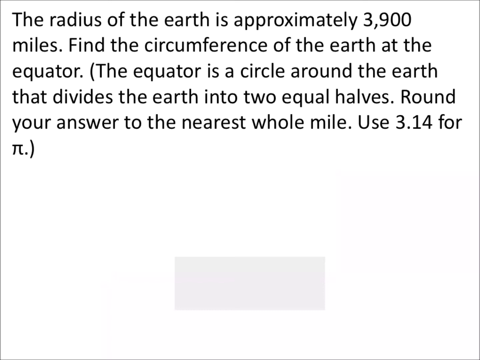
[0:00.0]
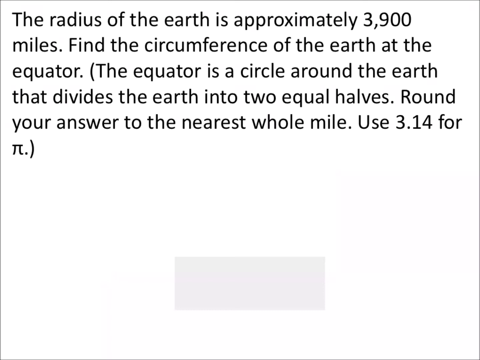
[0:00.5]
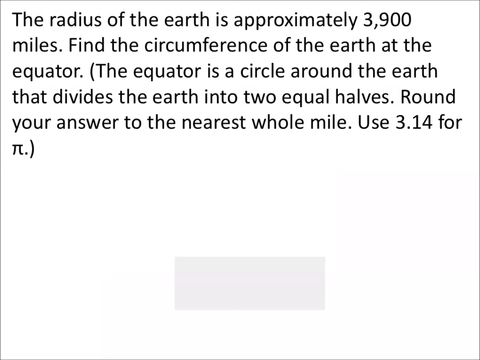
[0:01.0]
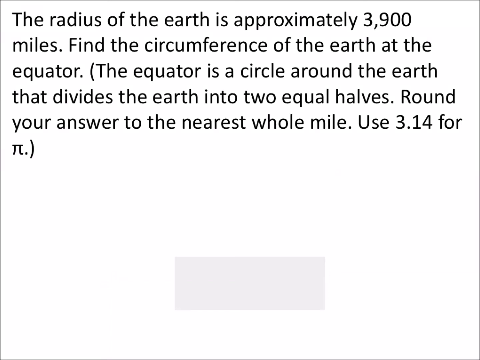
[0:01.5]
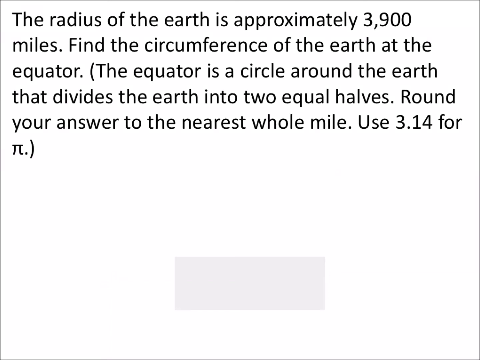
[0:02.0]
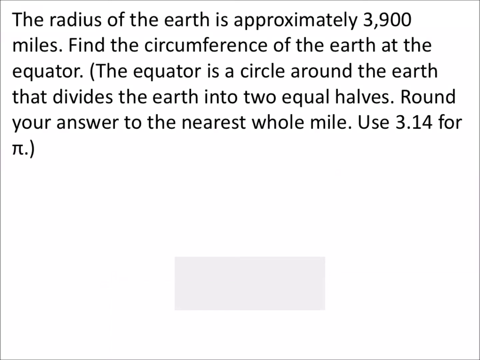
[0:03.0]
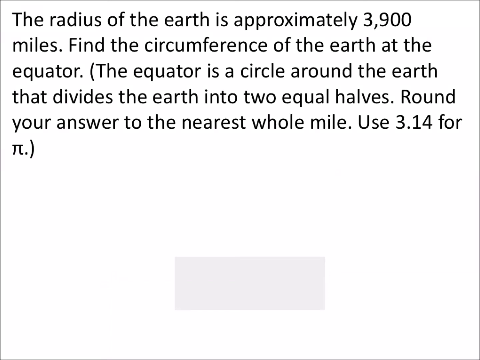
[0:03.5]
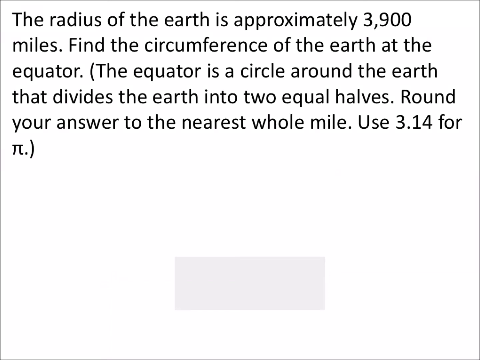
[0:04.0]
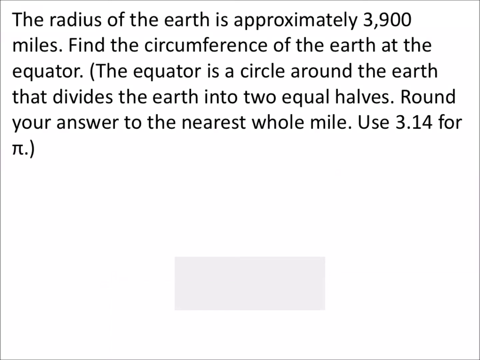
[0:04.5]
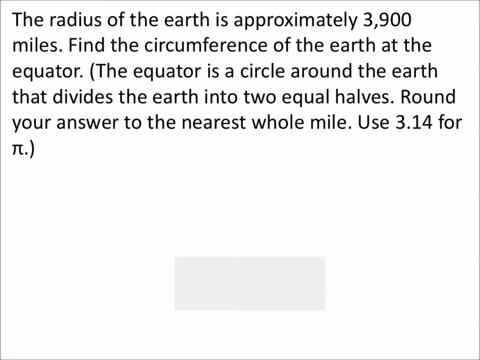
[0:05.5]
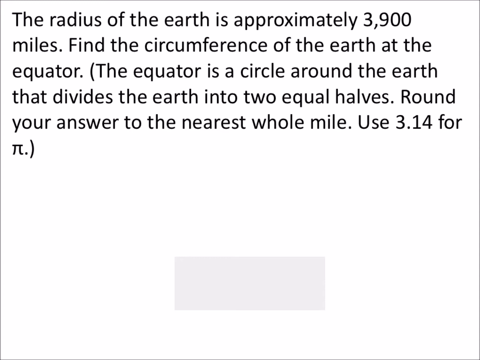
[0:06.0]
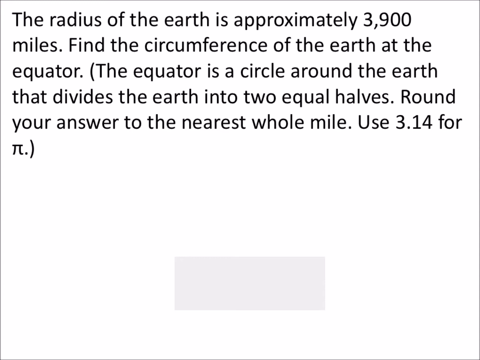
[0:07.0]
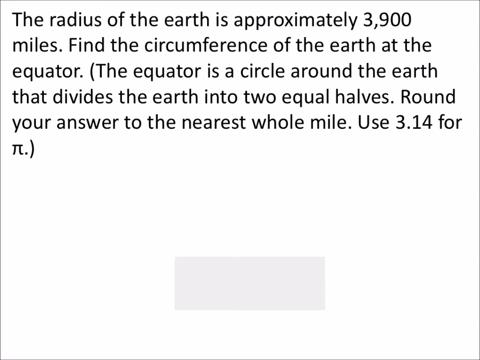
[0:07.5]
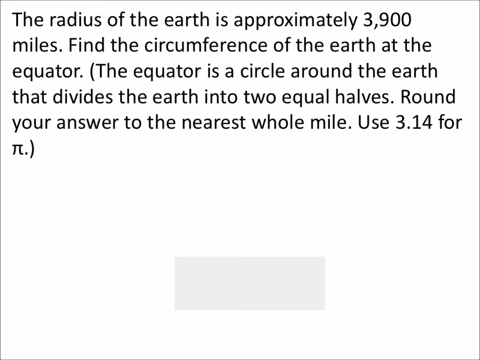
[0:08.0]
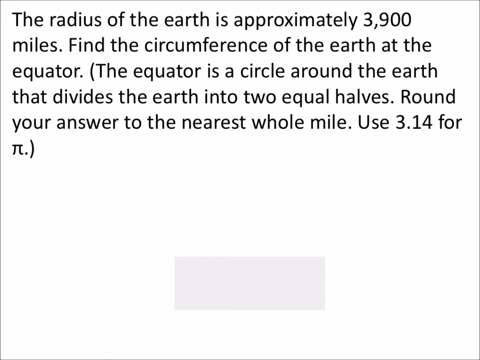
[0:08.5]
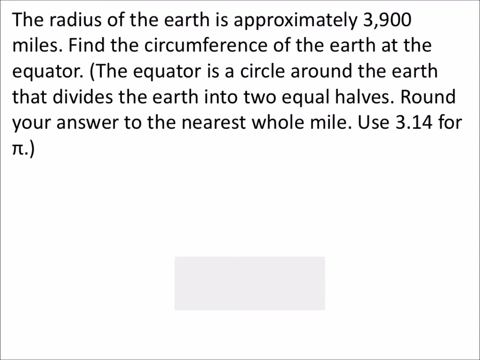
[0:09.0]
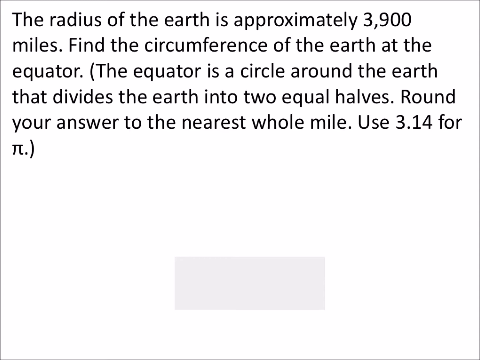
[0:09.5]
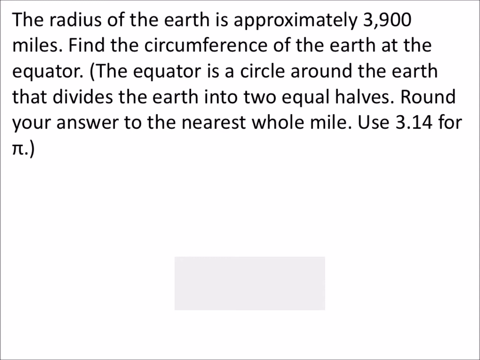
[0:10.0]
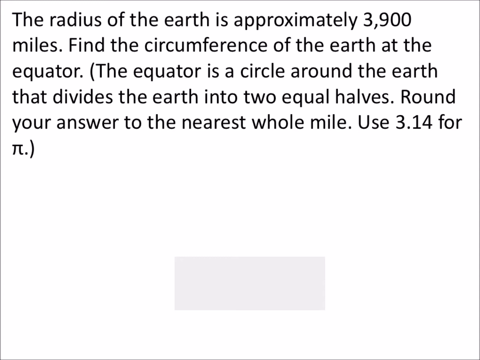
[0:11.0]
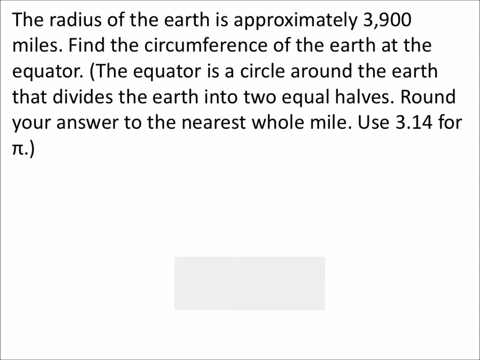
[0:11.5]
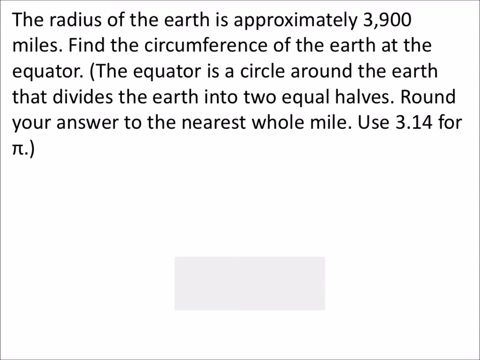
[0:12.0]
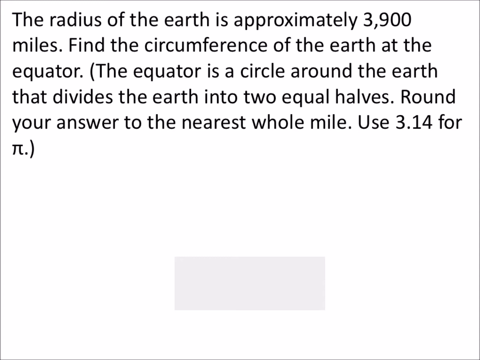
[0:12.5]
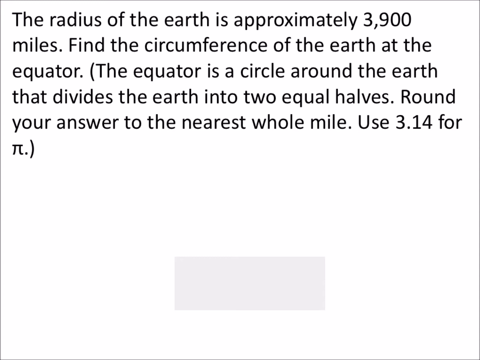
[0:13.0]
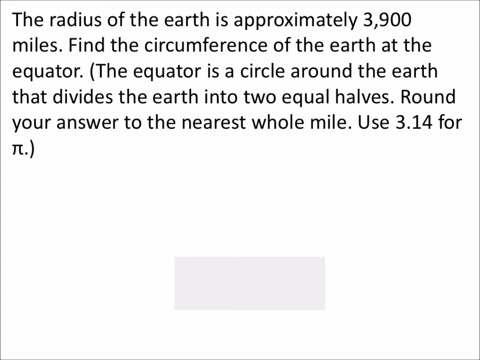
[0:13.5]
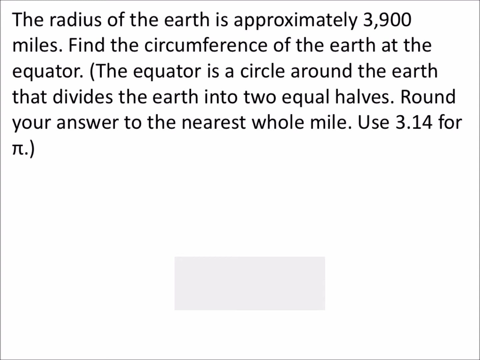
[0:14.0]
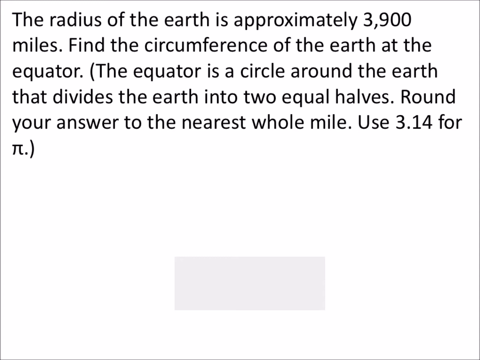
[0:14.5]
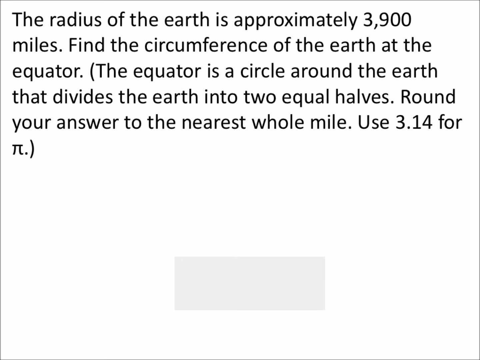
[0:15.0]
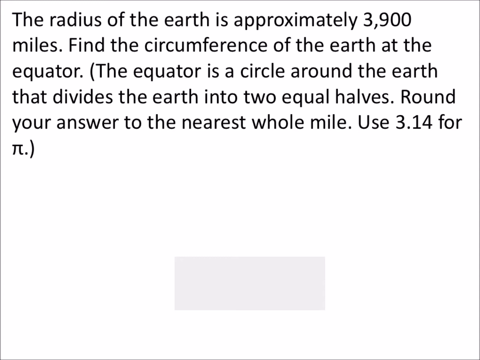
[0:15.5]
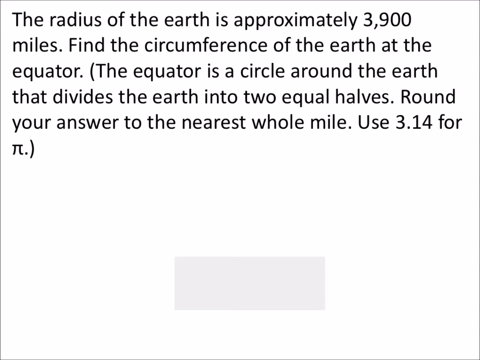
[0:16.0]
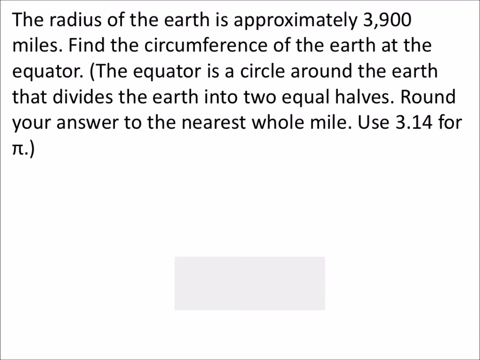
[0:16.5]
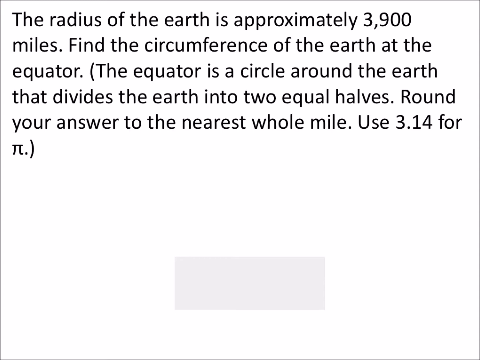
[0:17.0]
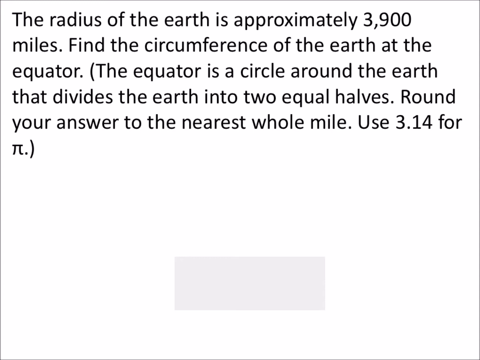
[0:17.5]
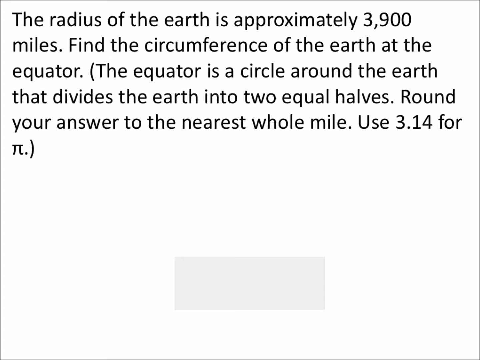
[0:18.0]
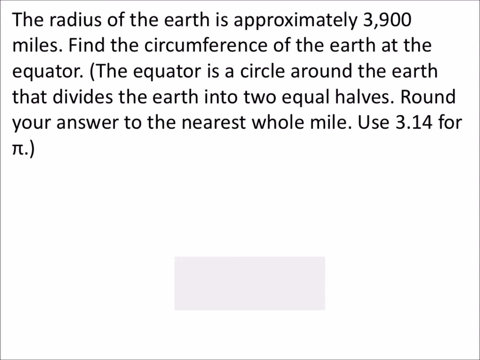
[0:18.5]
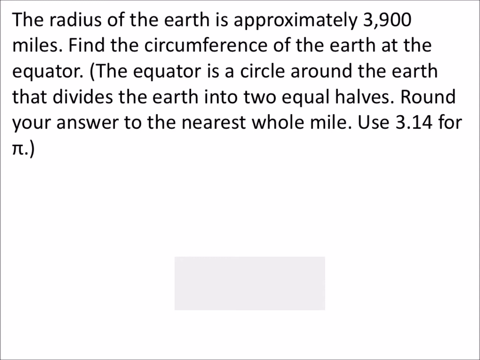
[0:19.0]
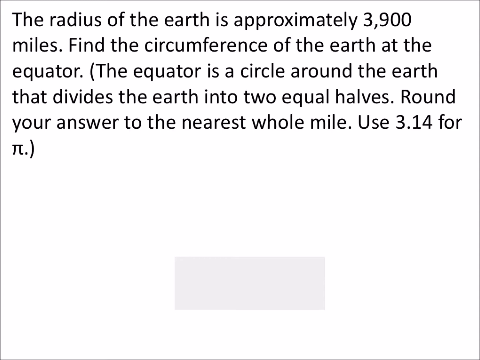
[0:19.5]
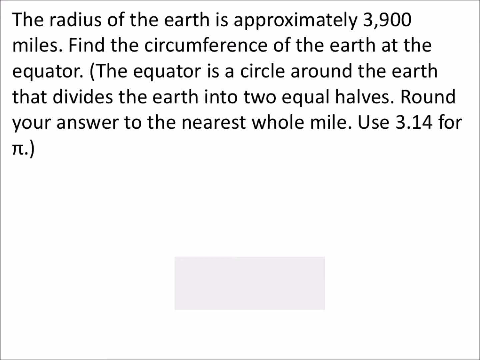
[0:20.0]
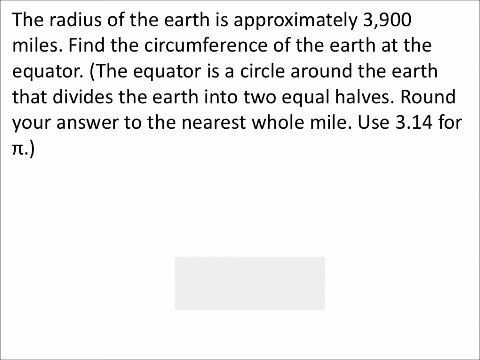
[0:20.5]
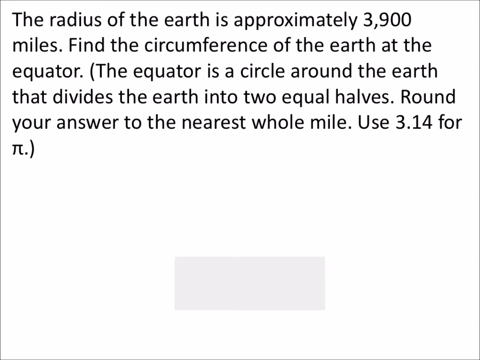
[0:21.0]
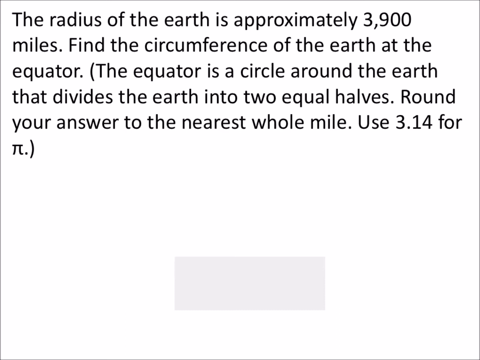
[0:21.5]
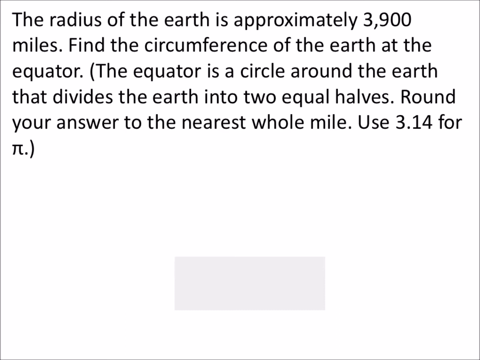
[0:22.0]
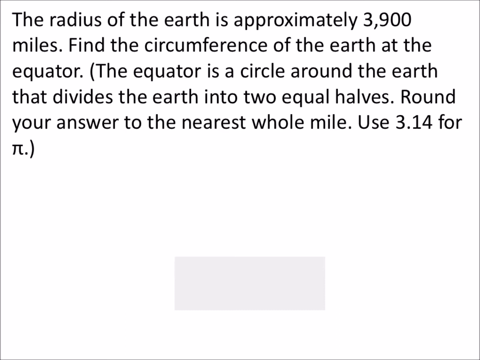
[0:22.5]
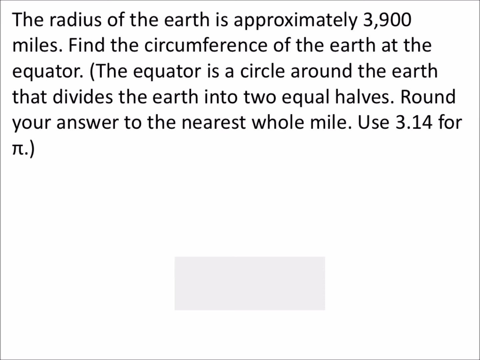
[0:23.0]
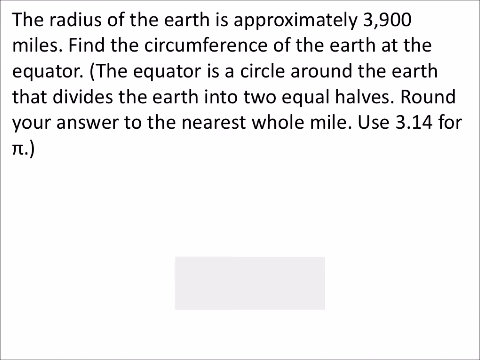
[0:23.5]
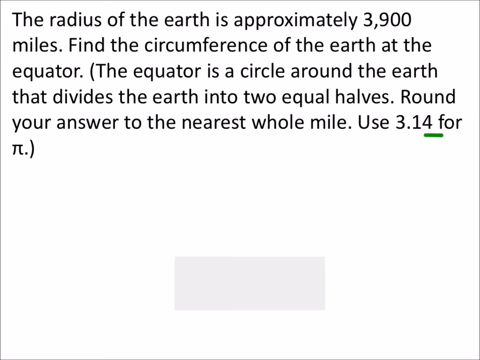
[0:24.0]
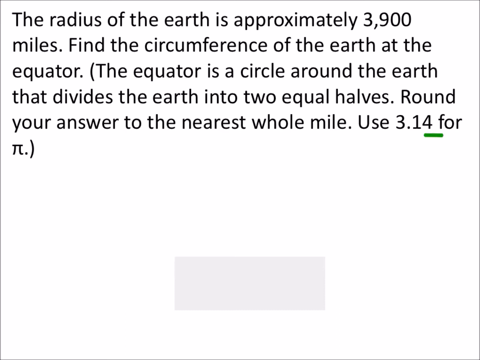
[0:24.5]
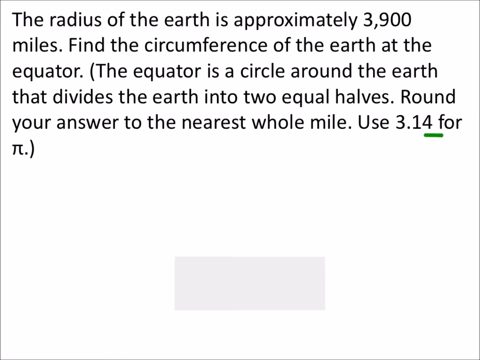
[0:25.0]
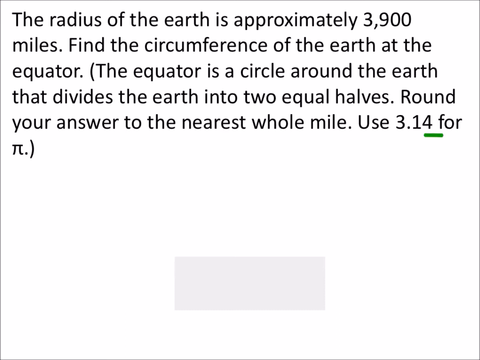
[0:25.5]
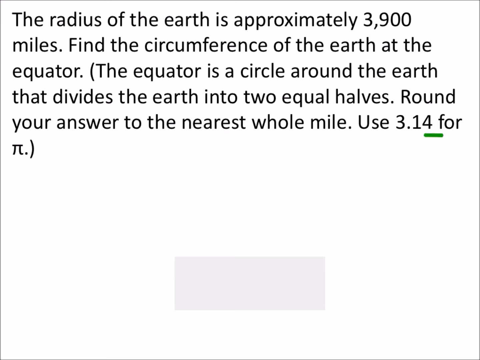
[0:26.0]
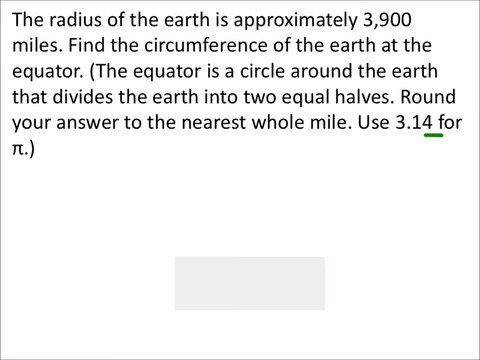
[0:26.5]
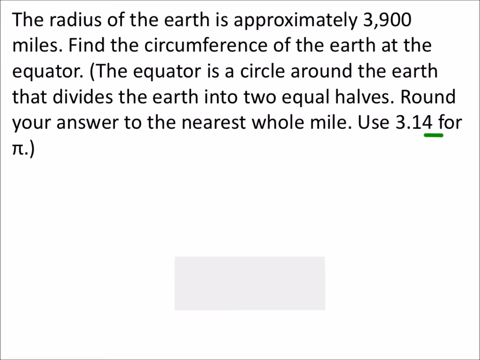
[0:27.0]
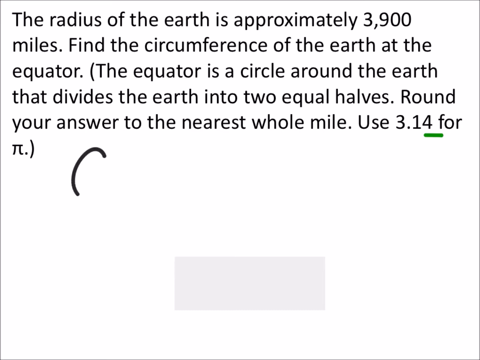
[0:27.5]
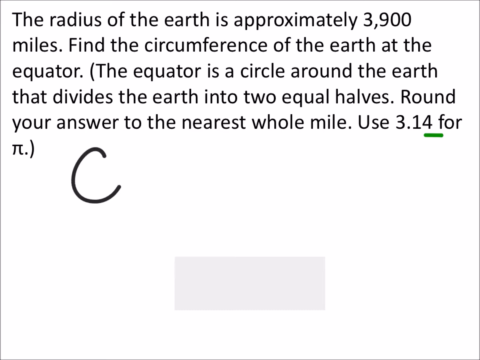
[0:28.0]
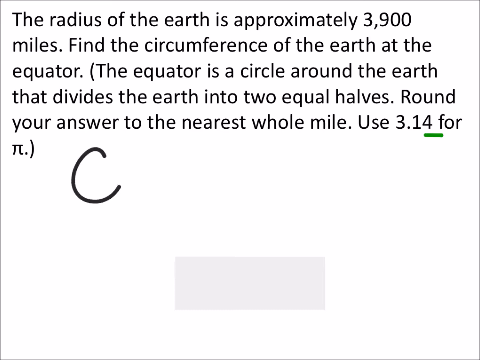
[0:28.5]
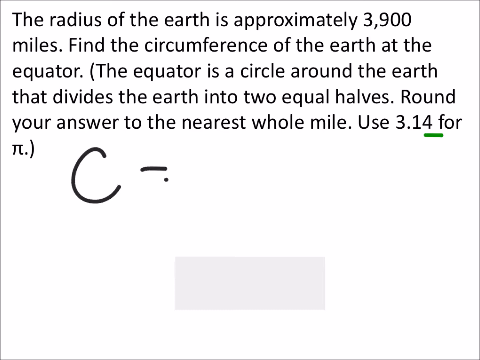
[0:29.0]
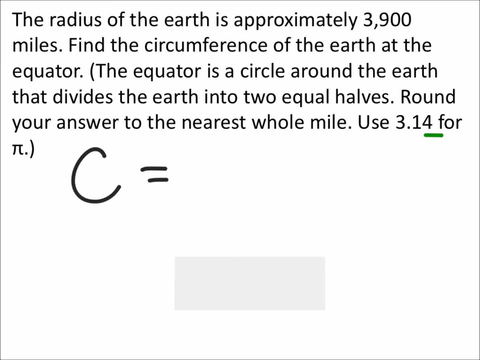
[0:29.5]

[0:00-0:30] The video opens on a solid white background with black text starting from the top of the screen. It reads: "The radius of the earth is approximately 3,900 miles. Find the circumference of the earth at the equator. (The equator is a circle around the earth that divides the earth into two equal halves.) Round your answer to the nearest whole mile. Use 3.14 for pi." Below the text, the lower half of the screen is solid white, with a very light gray rectangle centered at the bottom. In what looks like handwriting, as if someone is using a pad to add to the screen, a large black C is written out with an equal sign to its right. A green underline appears under the 3.14. The handwriting now reads "C =".